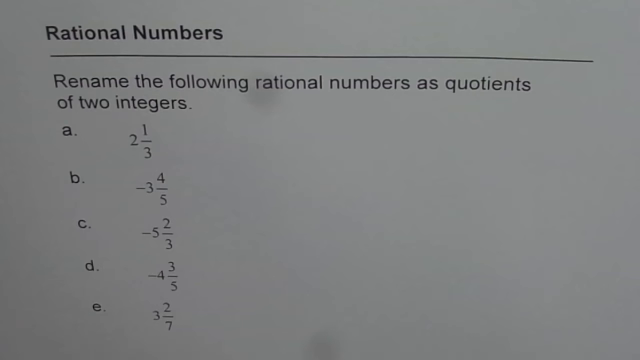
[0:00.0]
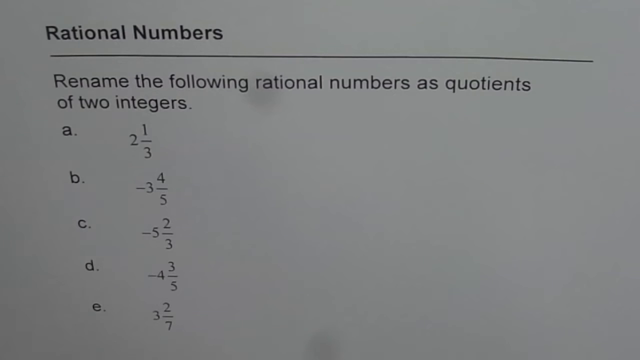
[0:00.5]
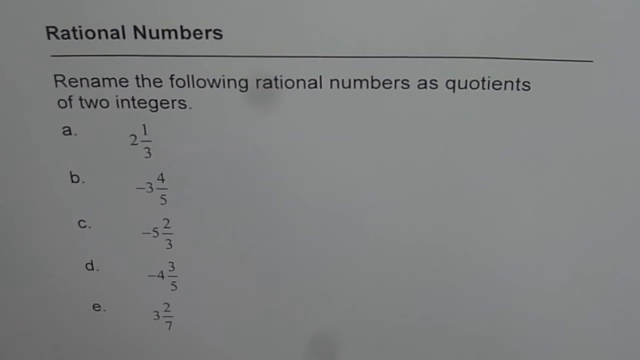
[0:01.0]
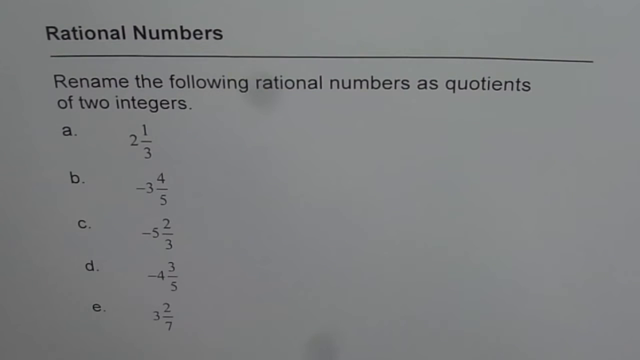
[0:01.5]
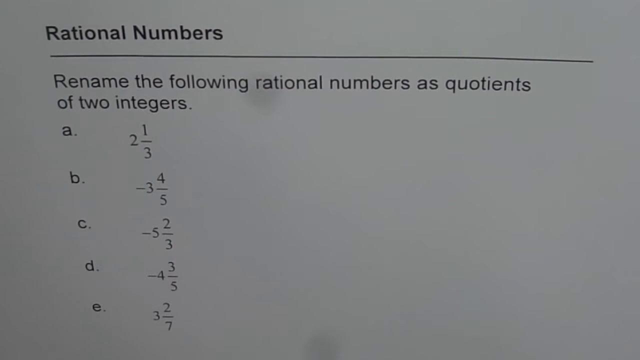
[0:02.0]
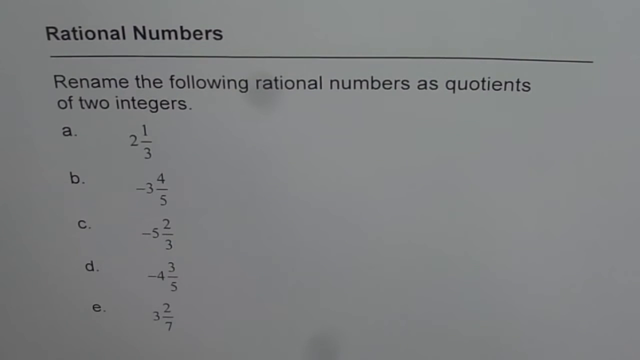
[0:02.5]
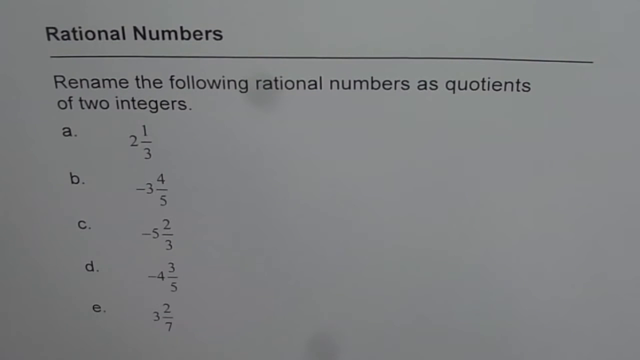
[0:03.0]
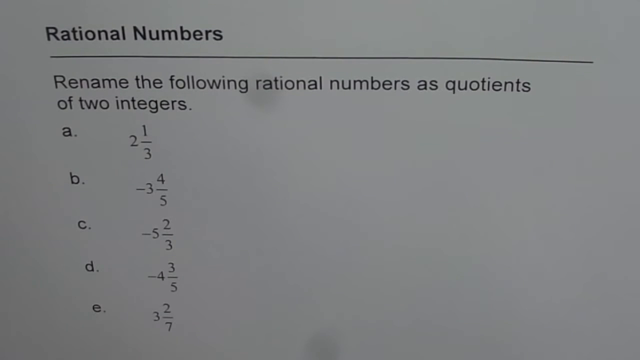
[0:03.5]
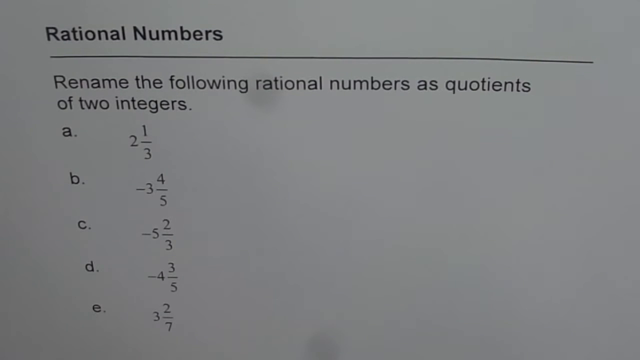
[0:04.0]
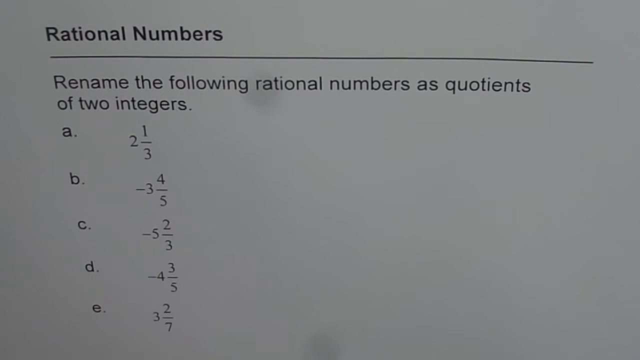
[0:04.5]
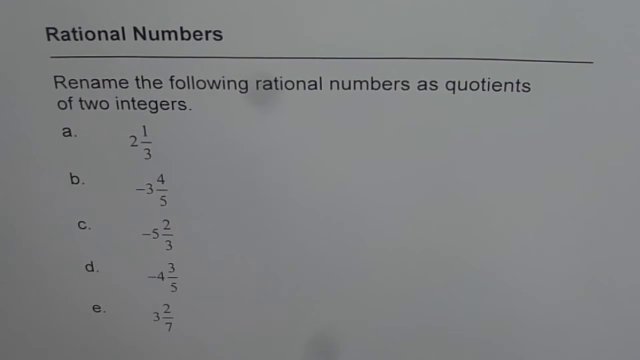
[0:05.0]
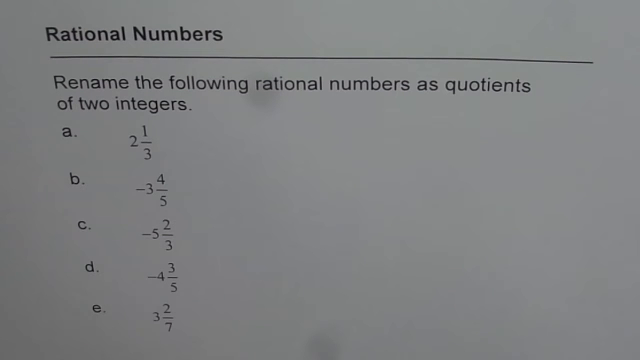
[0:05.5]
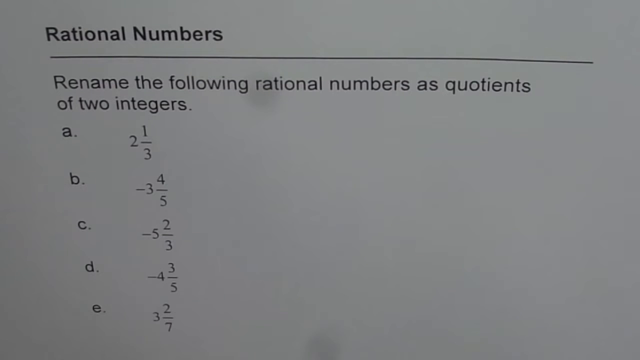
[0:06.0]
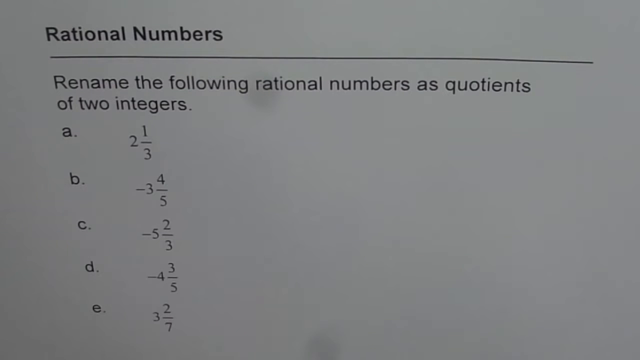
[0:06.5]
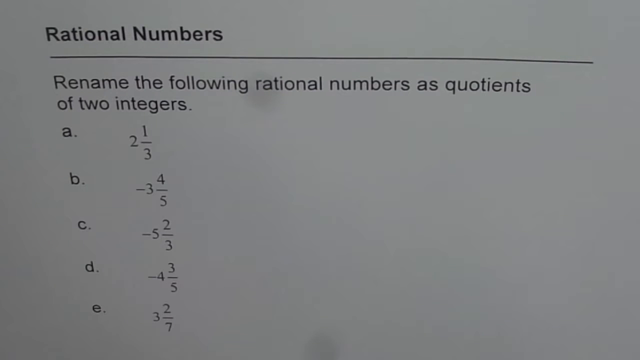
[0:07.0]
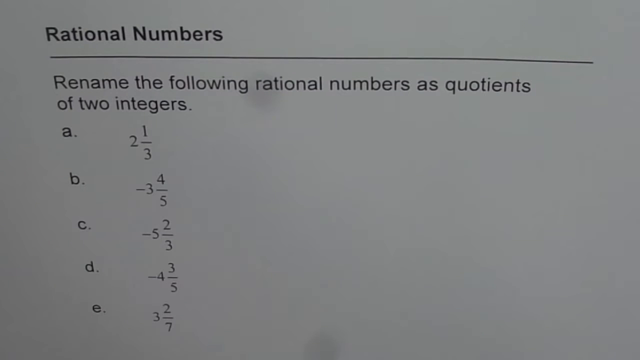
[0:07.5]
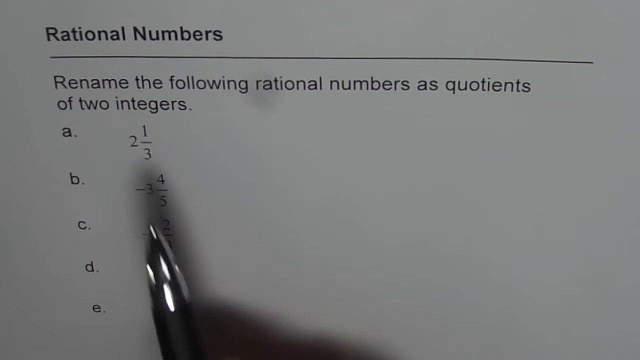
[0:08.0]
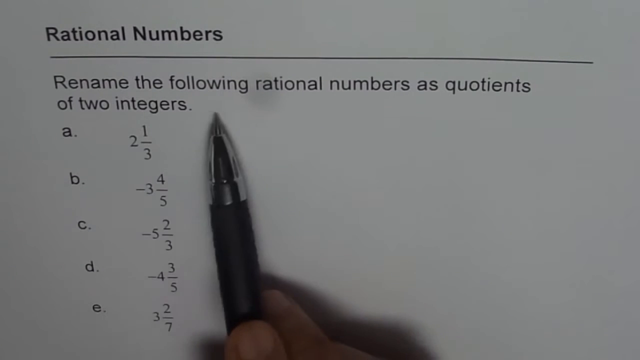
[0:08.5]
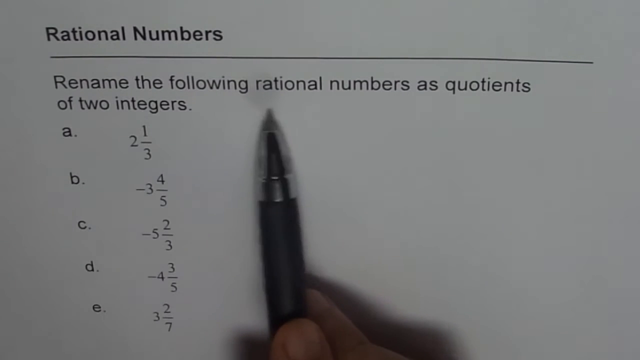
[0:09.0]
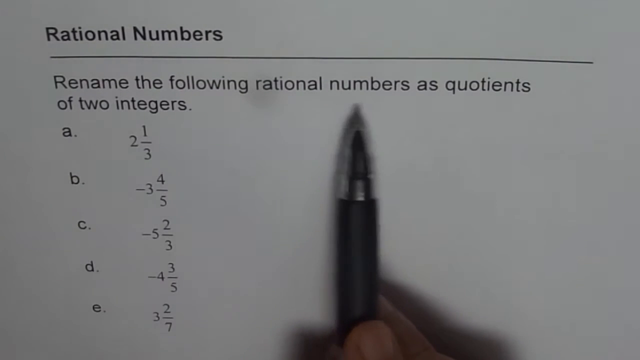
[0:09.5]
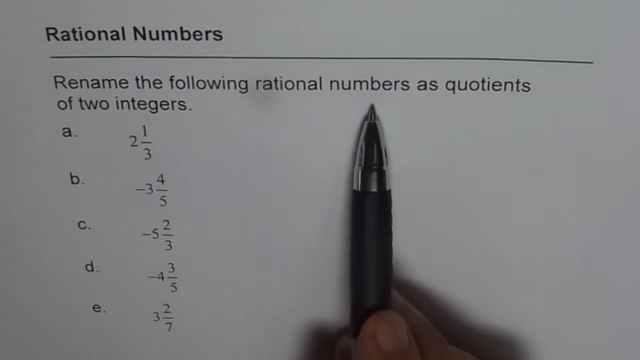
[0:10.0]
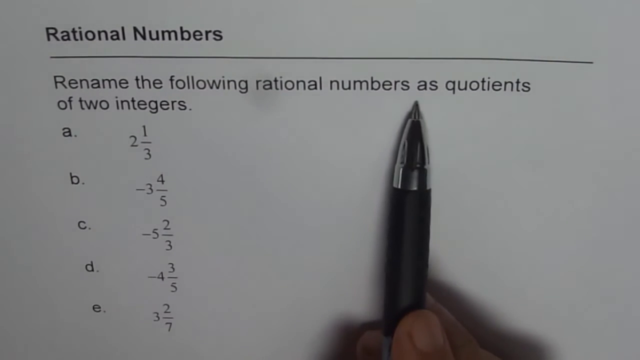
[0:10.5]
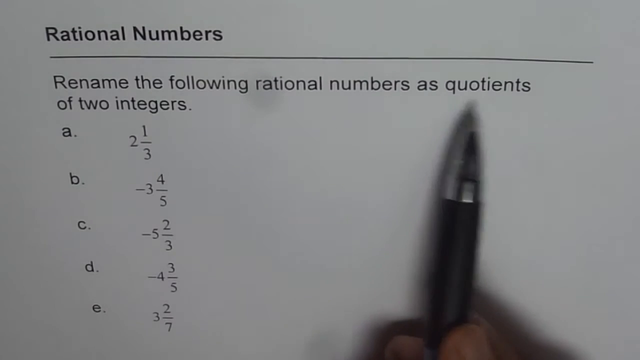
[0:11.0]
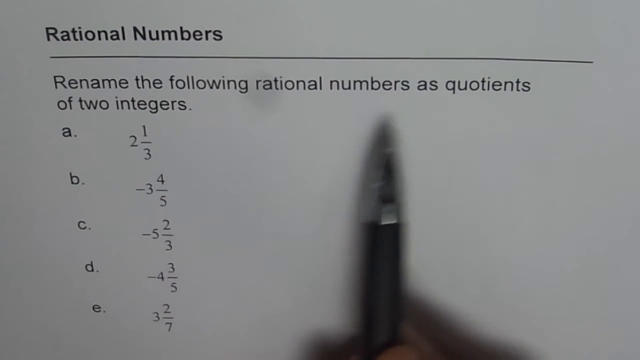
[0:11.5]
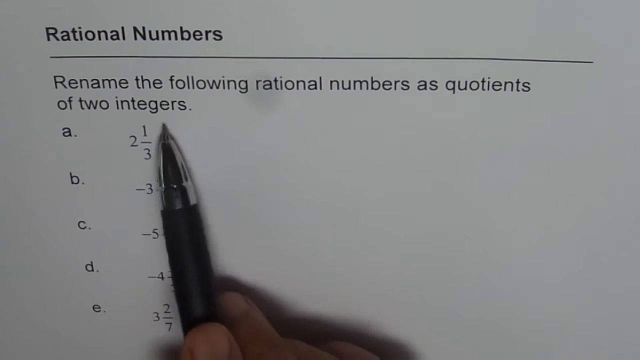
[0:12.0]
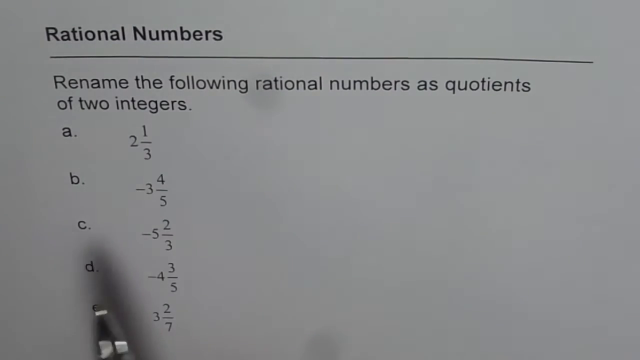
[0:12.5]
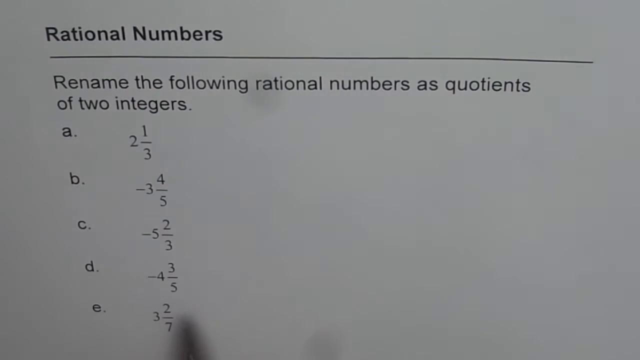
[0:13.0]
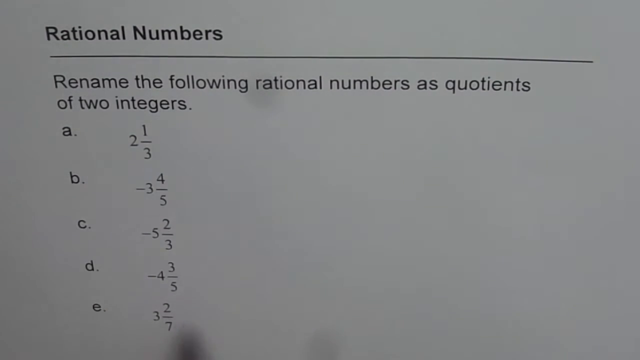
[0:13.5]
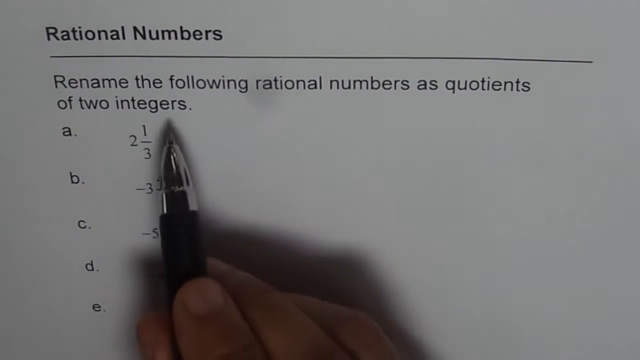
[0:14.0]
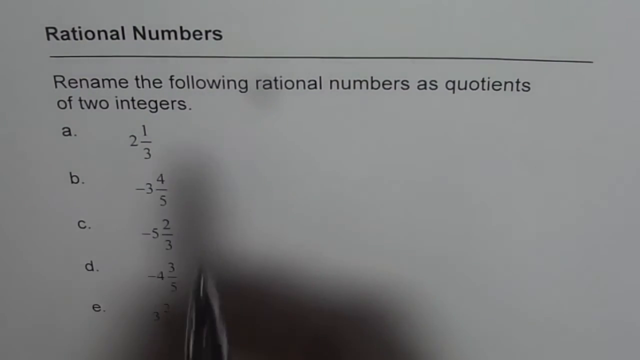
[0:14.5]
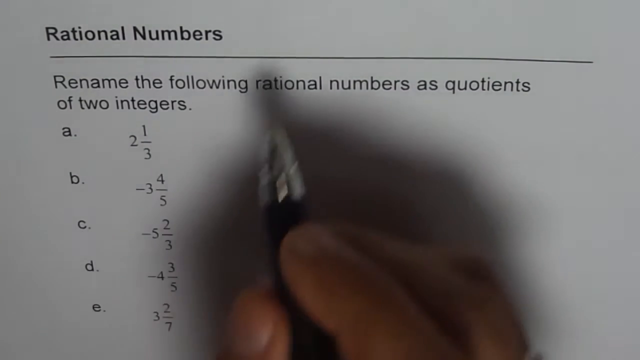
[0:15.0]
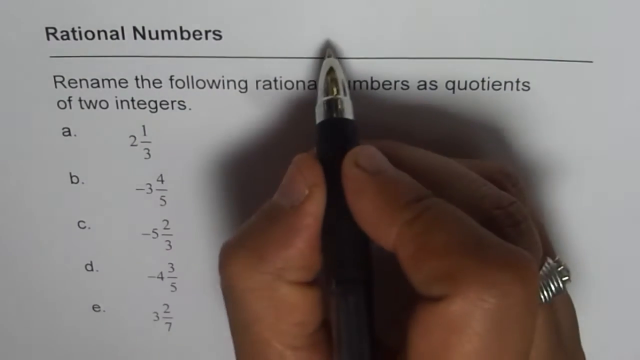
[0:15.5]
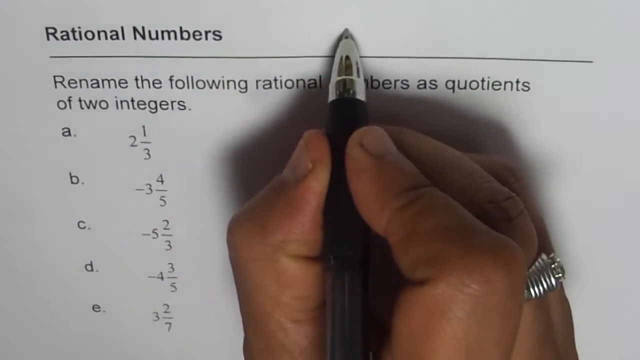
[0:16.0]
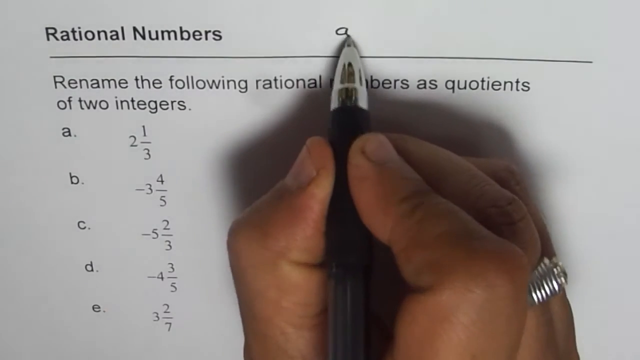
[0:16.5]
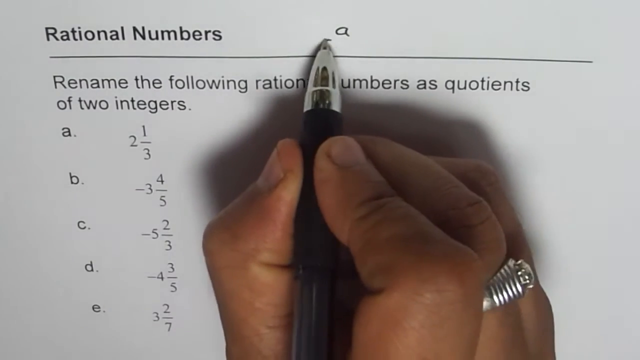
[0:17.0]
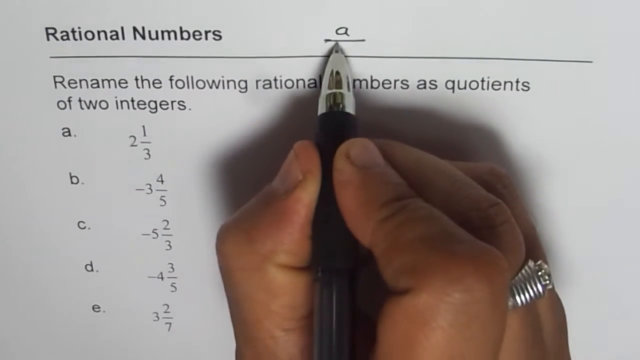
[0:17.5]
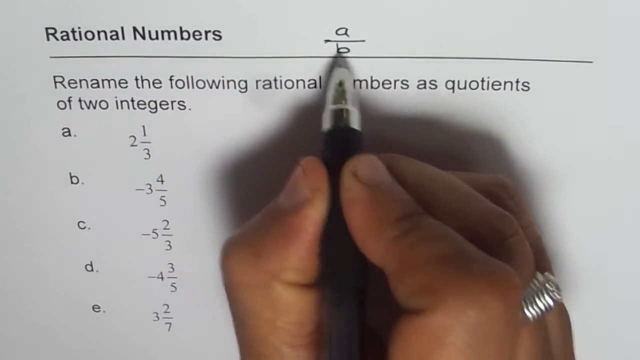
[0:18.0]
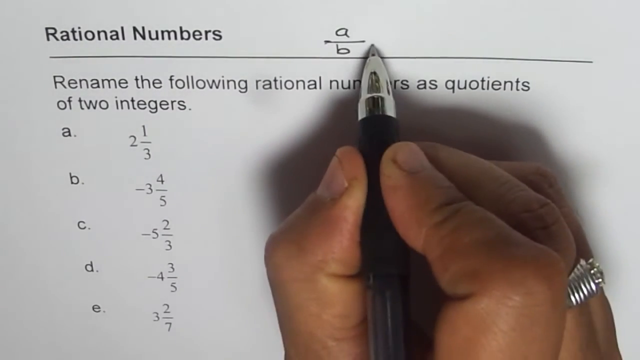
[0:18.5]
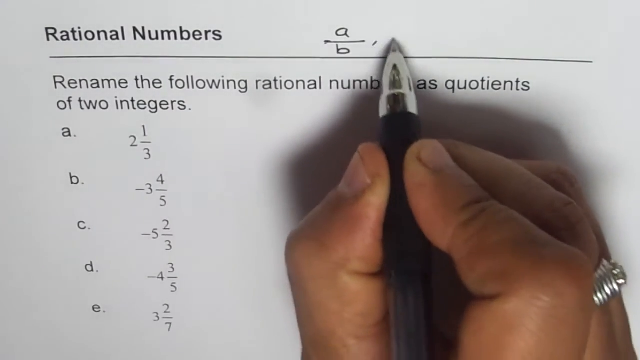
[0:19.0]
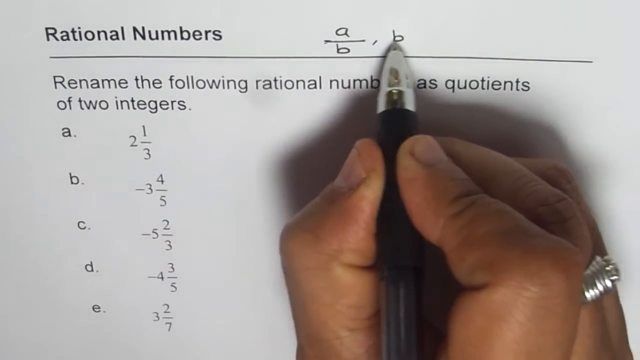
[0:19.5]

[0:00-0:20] A white piece of paper with black text shows a math question with five possible answers labeled A through E. At the top it reads "rational numbers," and below that, "rename the following rational numbers as quotients of two integers." The five multiple-choice options are: A, 2 and 1/3; B, -3 and 4/5; C, -5 and 2/3; D, -4 and 3/5; and E, 3 and 2/7. A few seconds in, a hand holding a black ink pen enters the frame and very briefly points to a few things on the paper, then moves back to the top of the paper and writes "A/5, B =". The handwriting is feminine in style, clear and neat.